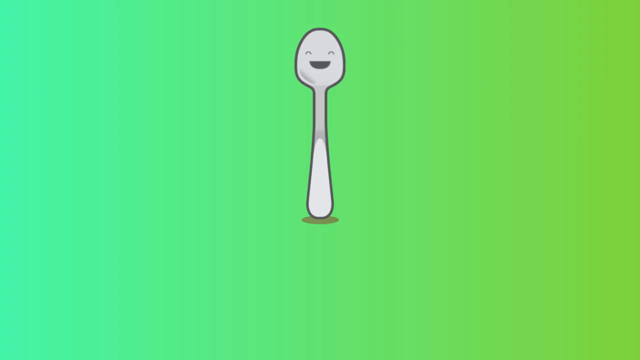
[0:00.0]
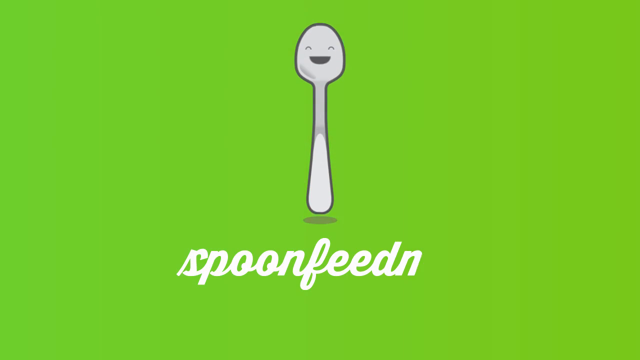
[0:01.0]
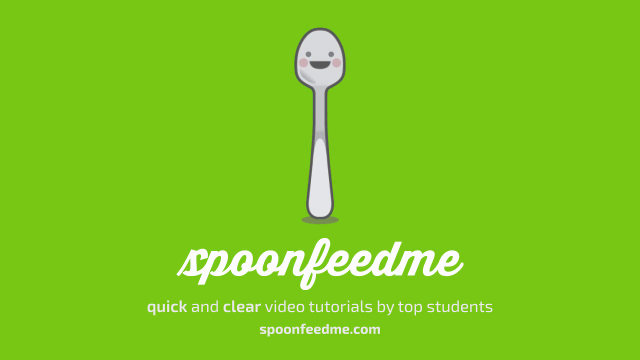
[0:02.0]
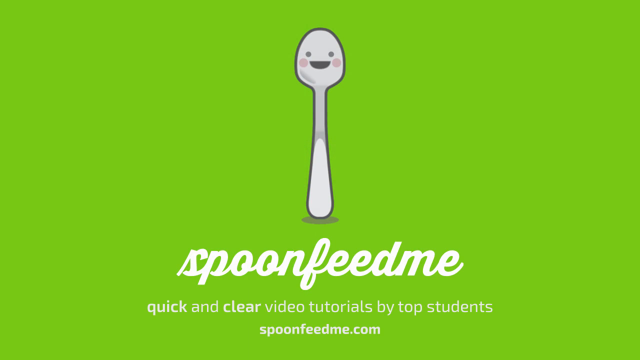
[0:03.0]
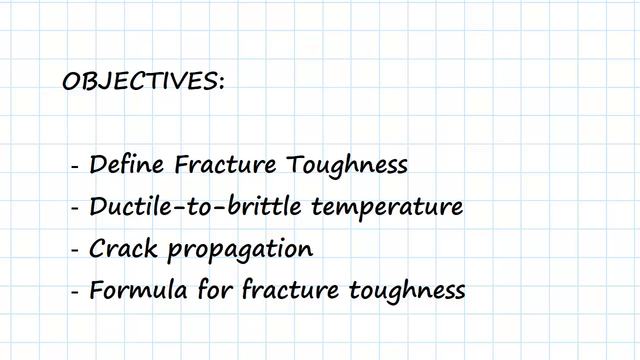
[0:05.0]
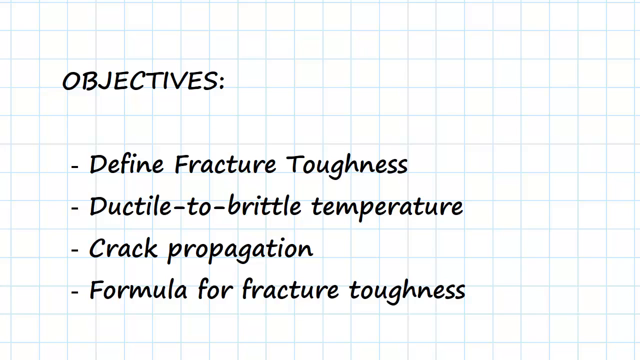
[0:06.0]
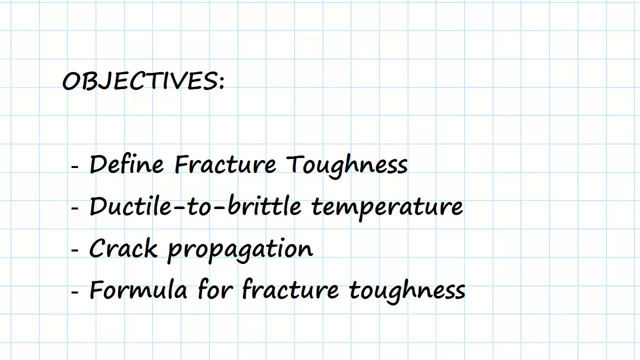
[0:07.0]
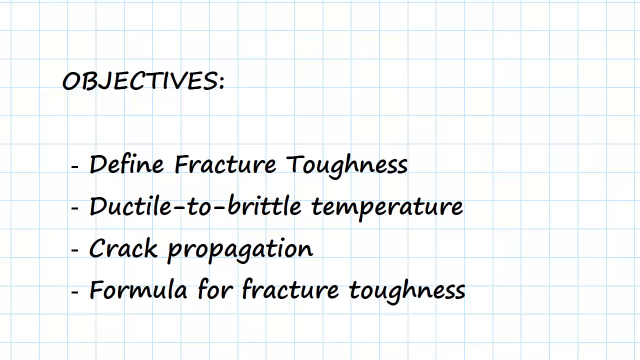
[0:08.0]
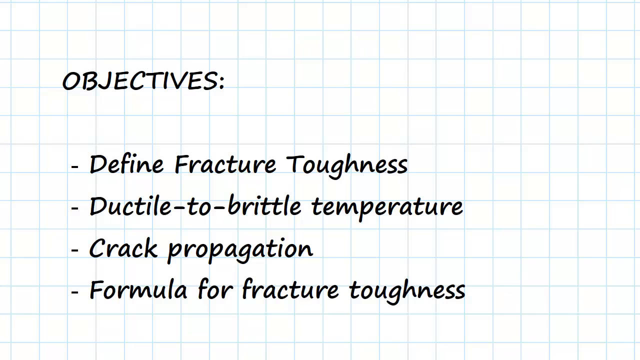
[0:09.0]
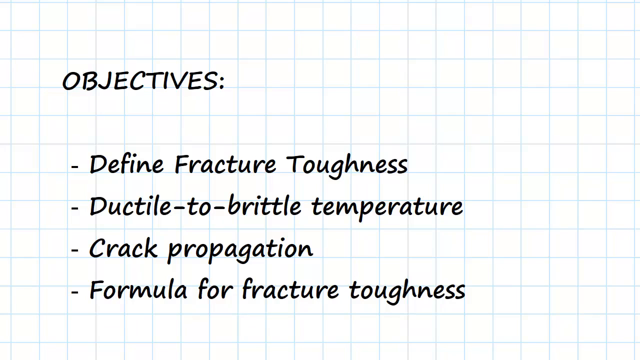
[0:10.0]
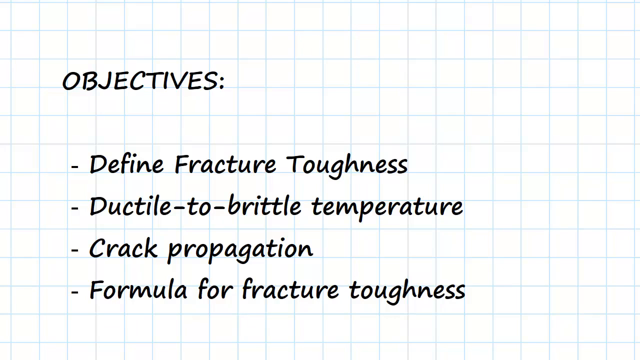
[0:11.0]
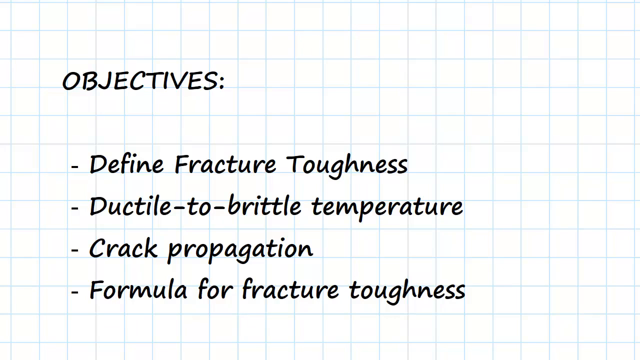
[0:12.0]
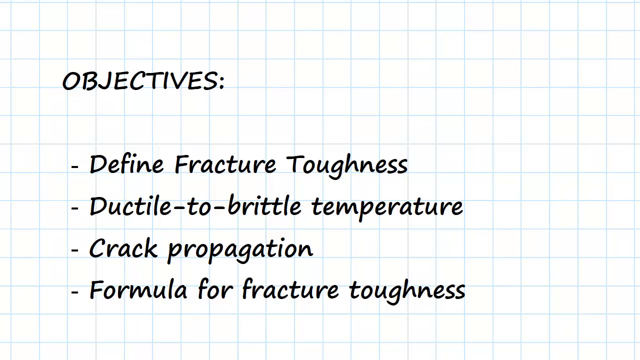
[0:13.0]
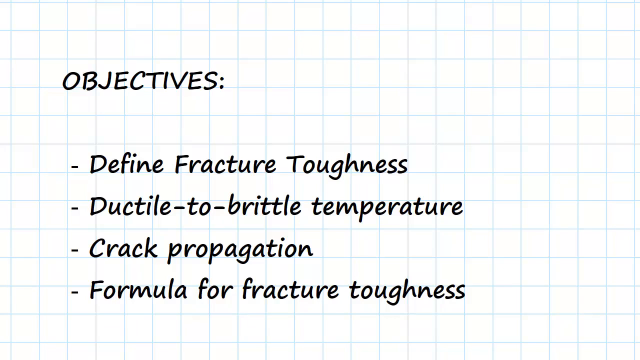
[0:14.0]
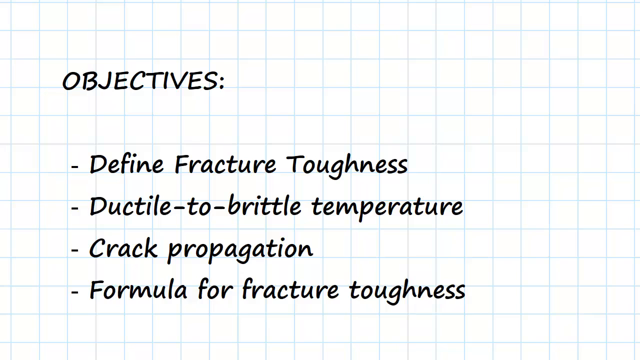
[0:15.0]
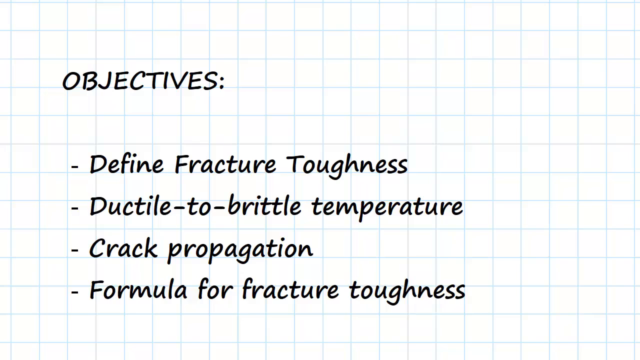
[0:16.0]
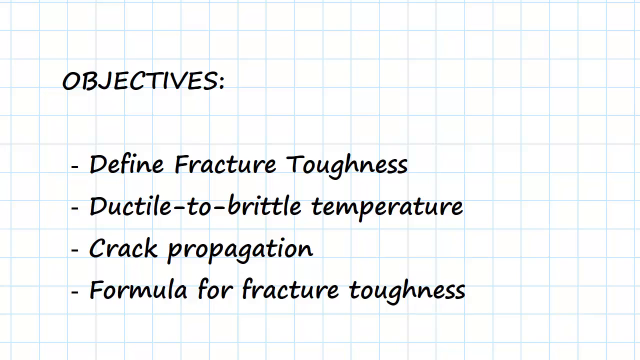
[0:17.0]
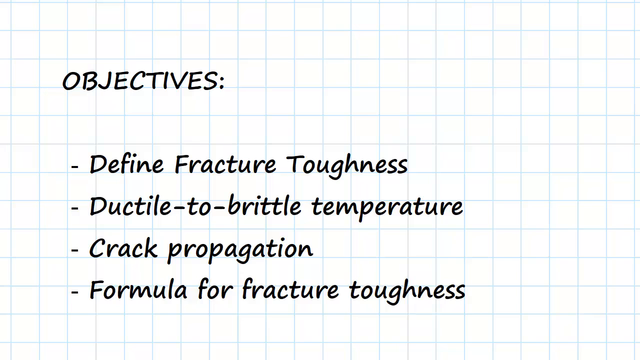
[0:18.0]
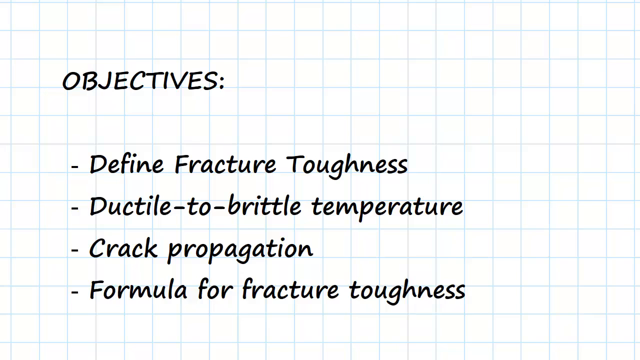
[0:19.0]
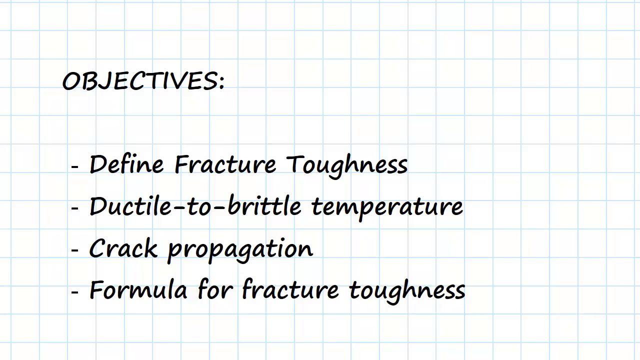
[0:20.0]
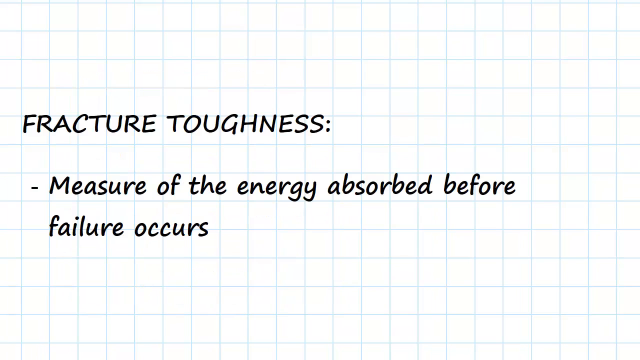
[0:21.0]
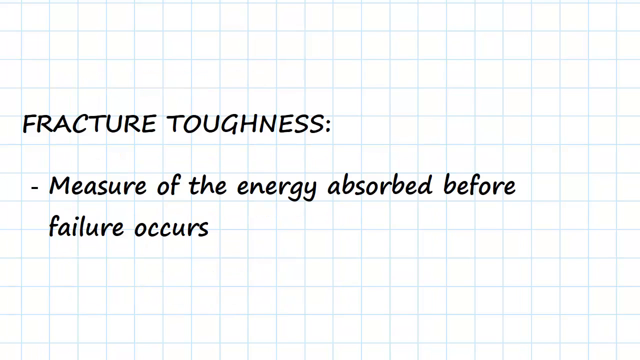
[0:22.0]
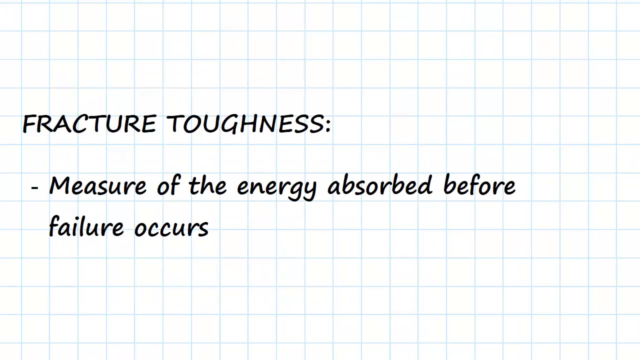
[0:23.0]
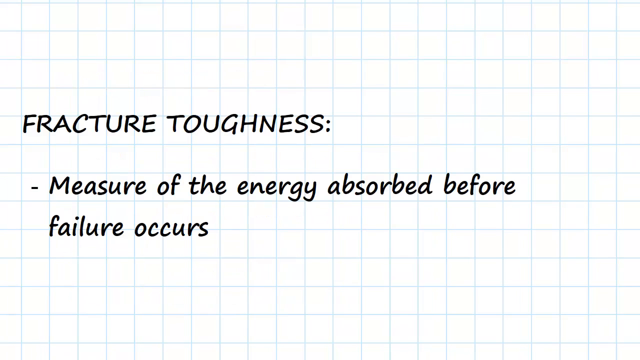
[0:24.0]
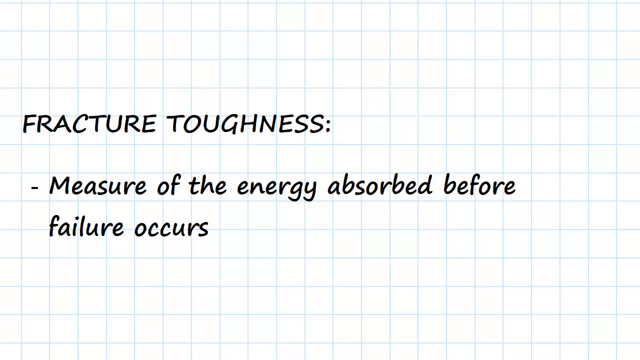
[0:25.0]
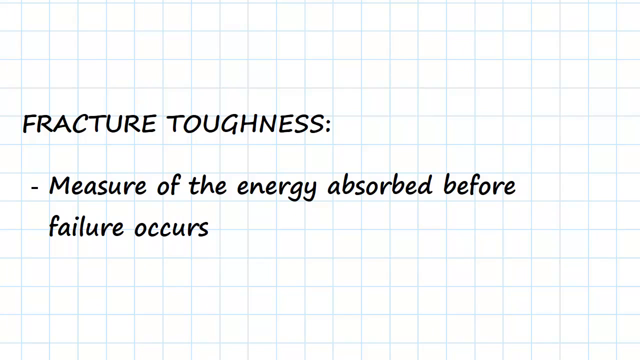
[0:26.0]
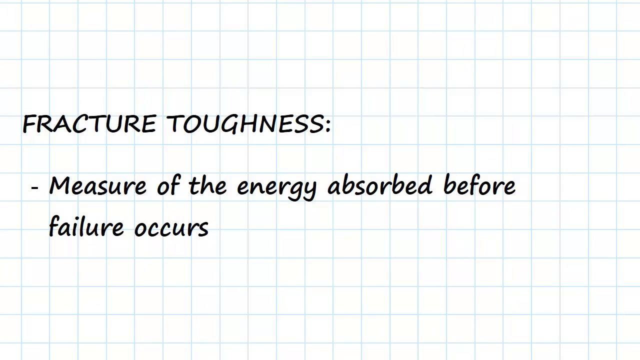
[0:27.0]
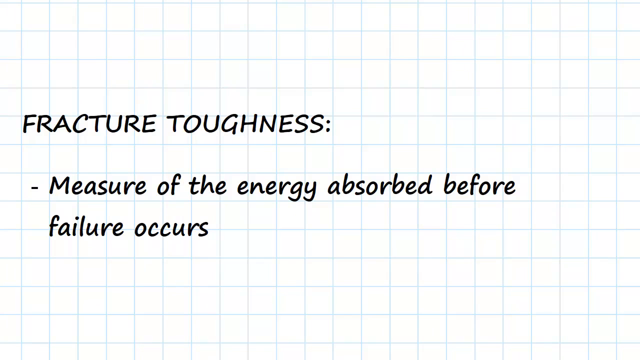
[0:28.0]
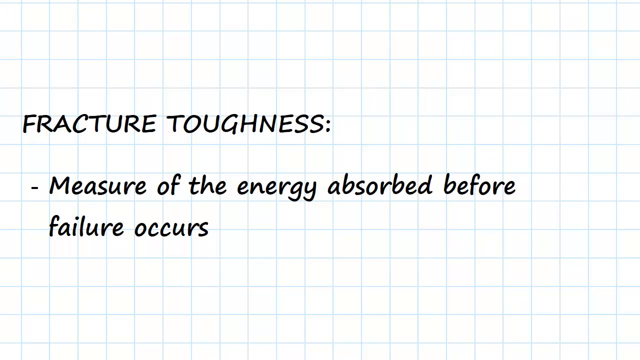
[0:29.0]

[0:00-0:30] A spoon with two eyes and a mouth appears on a green background. It jumps up and down excitedly, and as it does, the words "spoon feed me" appear at the bottom, with "quick and clear video tutorials by top students" below them. The animated spoon then blushes. The scene transitions to a black screen and then to a white background with a grid pattern whose lines are blue. The words "objectives", "defined fracture toughness", "ductile to brittle temperature", "crack propagation" and "formula for fracture toughness" appear on the screen while nothing else happens. These words are then removed and replaced by "fracture toughness measure of the energy absorbed before failure occurs", which stays on screen for the rest of the shot over the blue-lined white grid background.